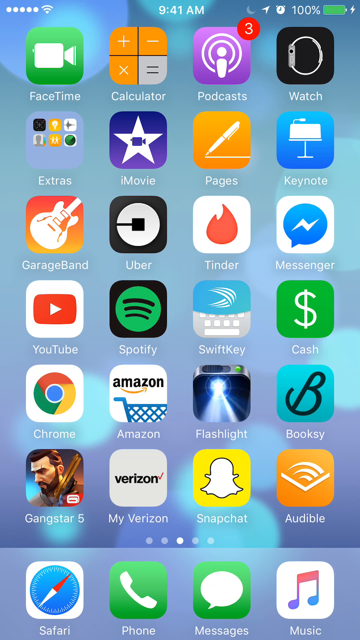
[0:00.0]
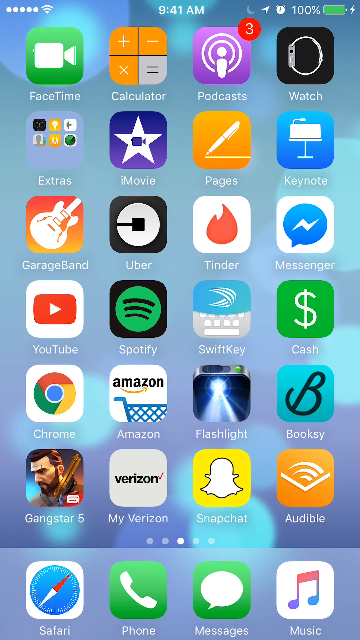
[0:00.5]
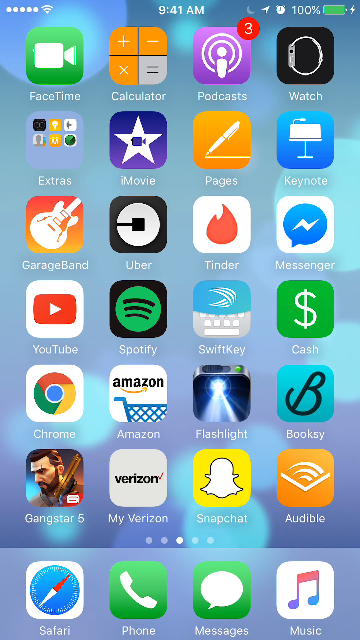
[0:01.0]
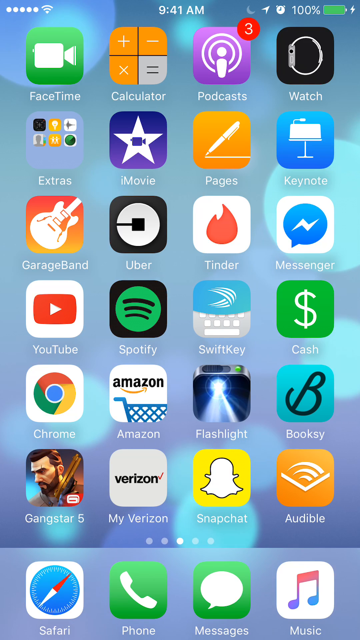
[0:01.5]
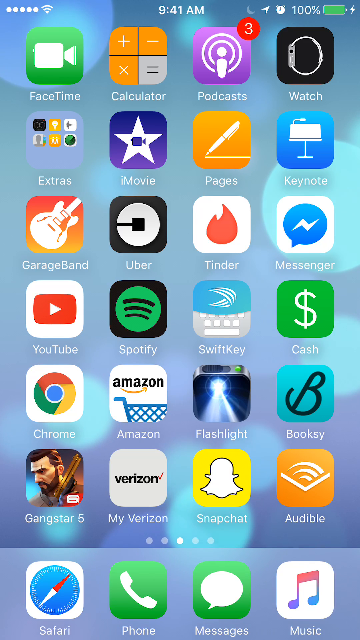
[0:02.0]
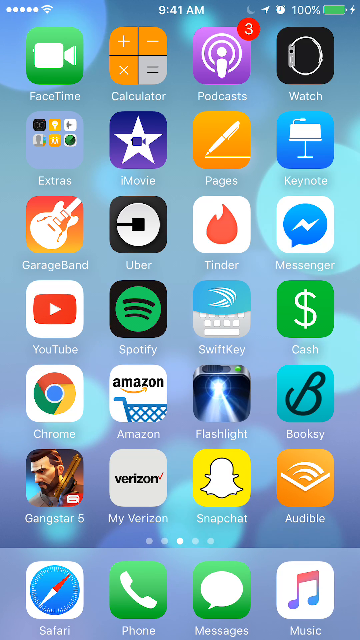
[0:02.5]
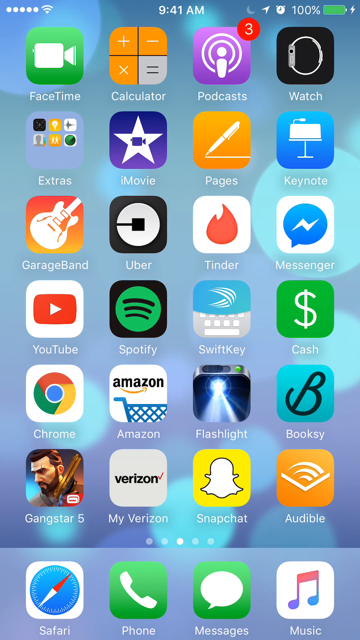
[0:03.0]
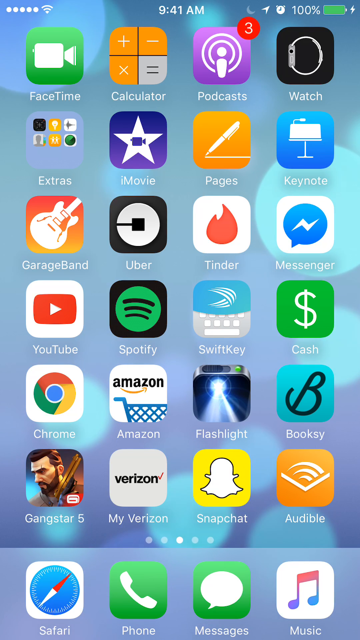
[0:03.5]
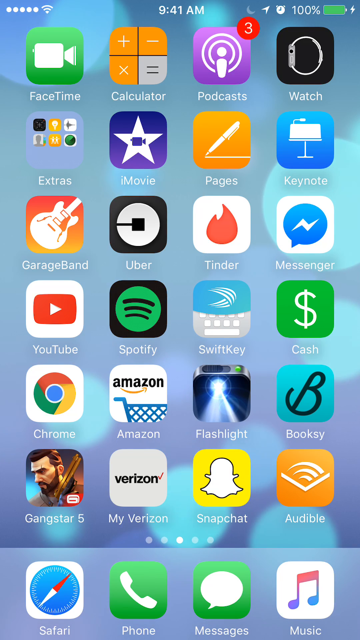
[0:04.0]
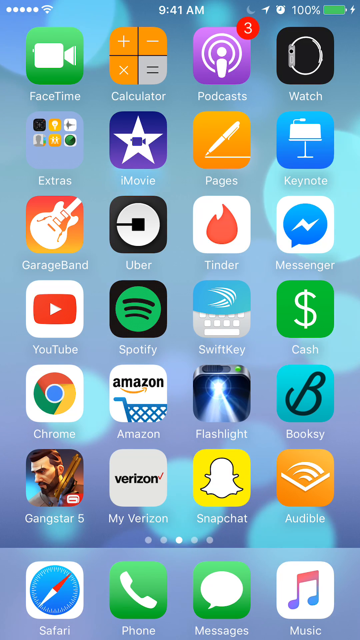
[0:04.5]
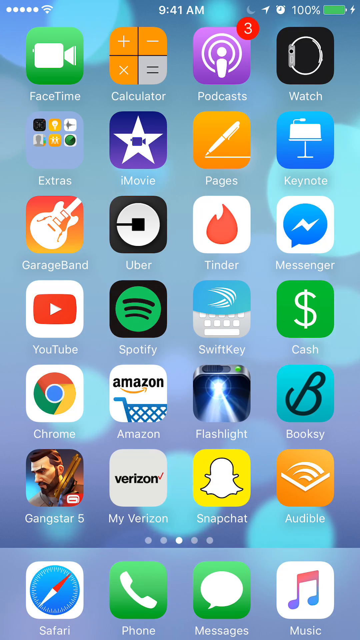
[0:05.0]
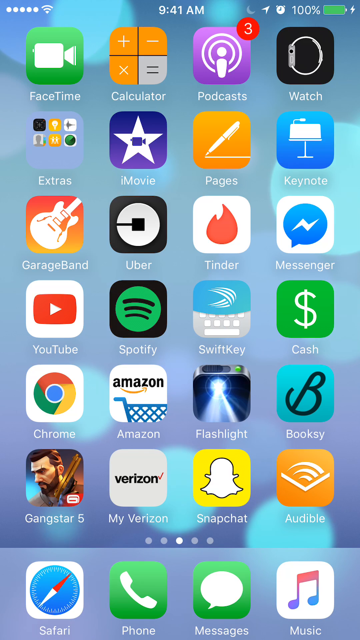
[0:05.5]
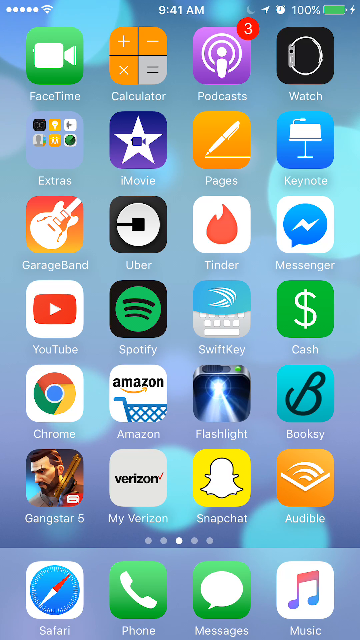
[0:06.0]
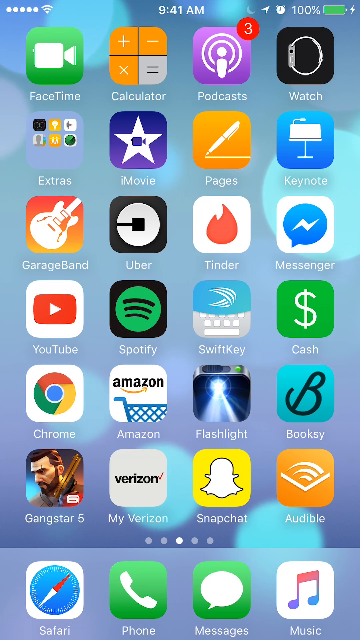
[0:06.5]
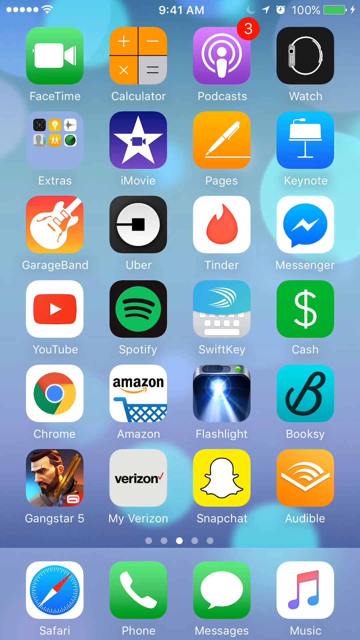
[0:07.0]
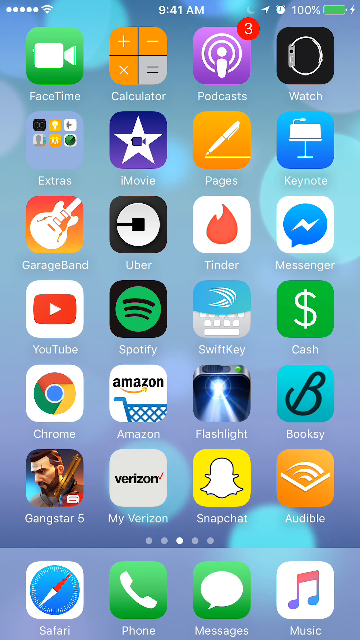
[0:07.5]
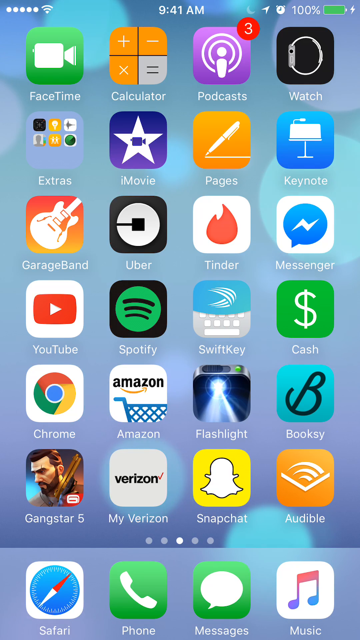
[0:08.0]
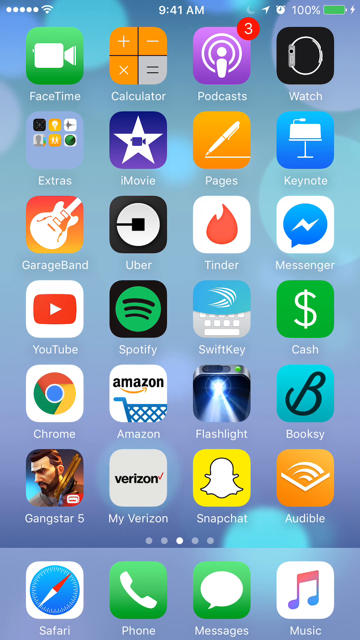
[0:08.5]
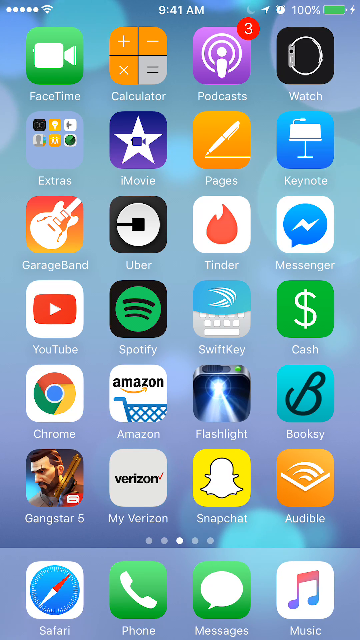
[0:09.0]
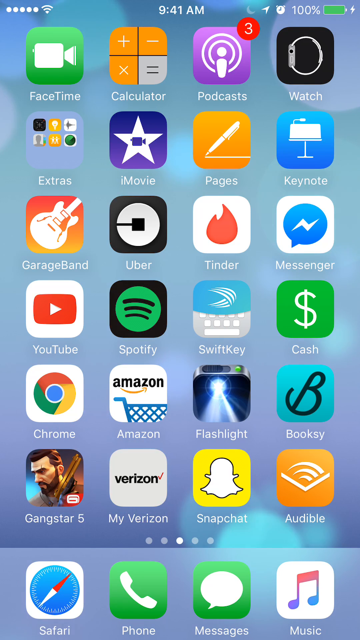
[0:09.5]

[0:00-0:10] A cell phone home screen is covered with a large number of apps, including FaceTime in the upper left corner, the Watch app, Cash App and Spotify, among many others. The background is animated, with lots of blurry bright dots floating around. At the top the time reads 9:41 AM, the battery is at 100% charge in the upper left corner, and the phone shows full signal. There are probably about 28 apps on the screen. The view stays on the home screen for a while before the person taps into what looks like the Messenger app.